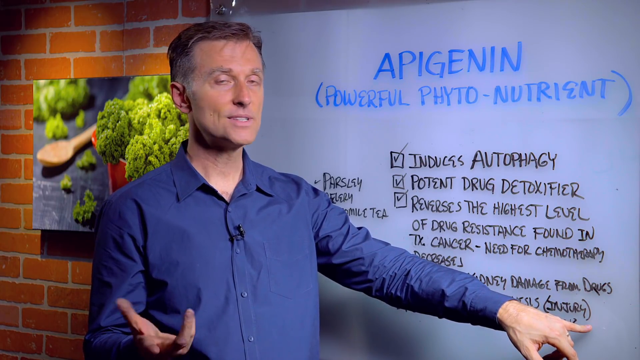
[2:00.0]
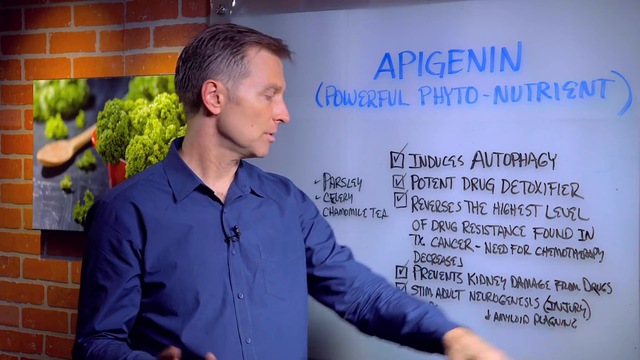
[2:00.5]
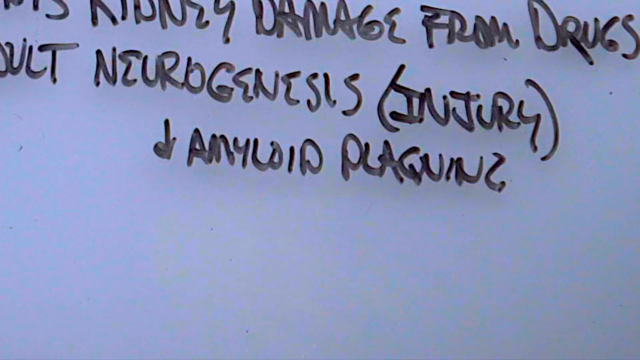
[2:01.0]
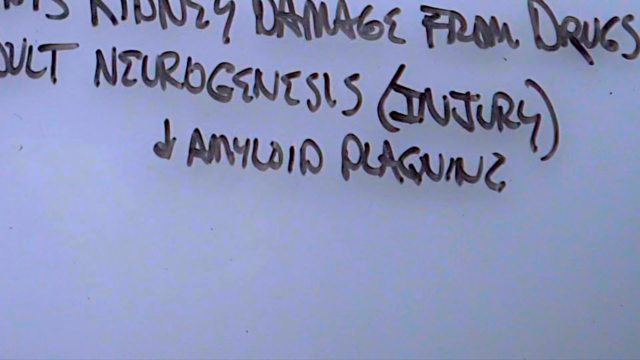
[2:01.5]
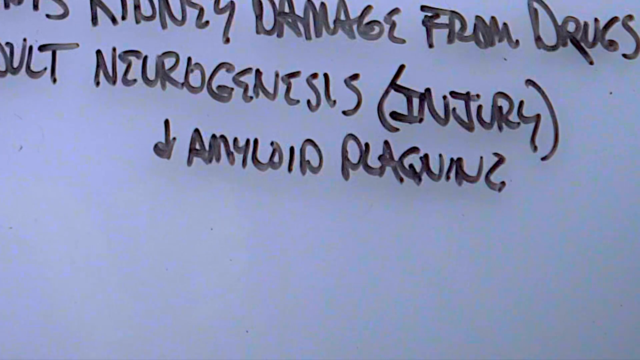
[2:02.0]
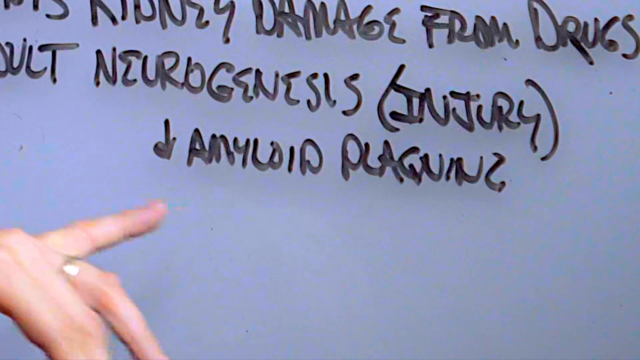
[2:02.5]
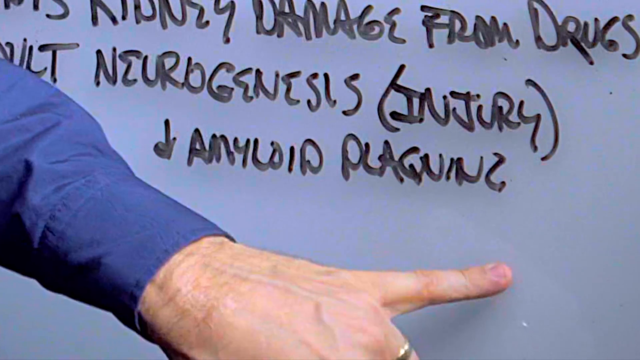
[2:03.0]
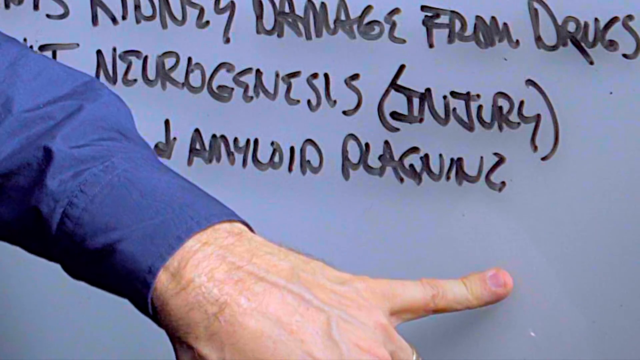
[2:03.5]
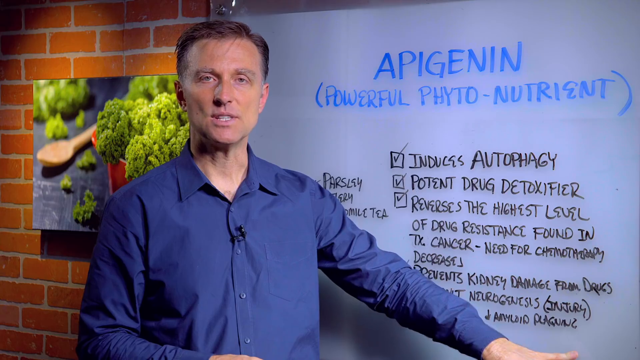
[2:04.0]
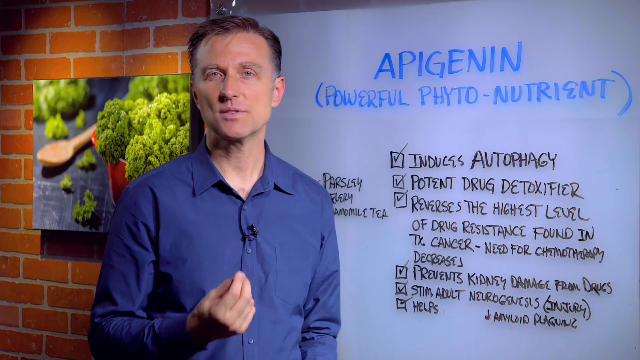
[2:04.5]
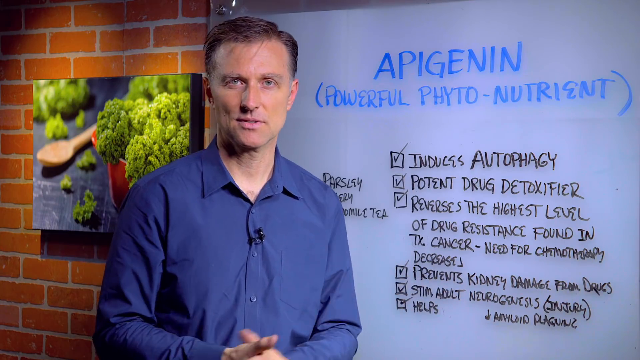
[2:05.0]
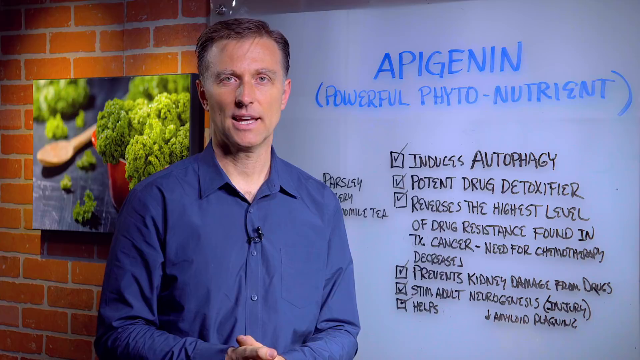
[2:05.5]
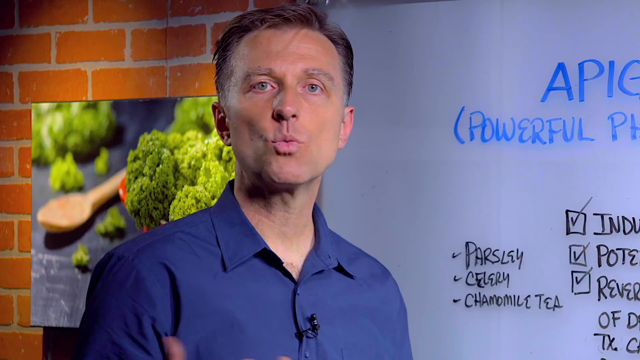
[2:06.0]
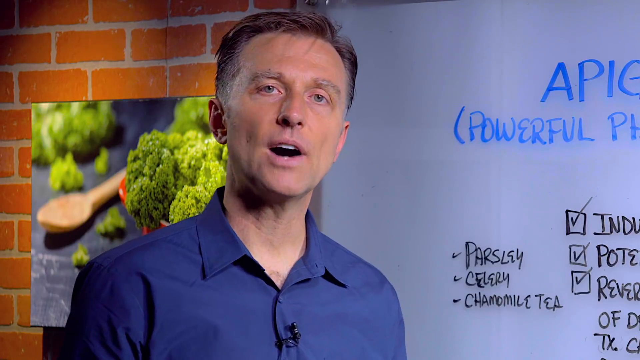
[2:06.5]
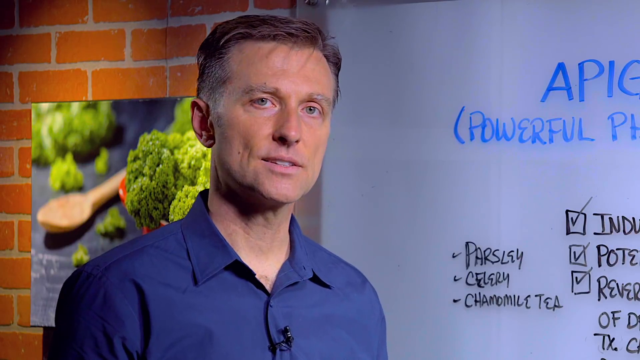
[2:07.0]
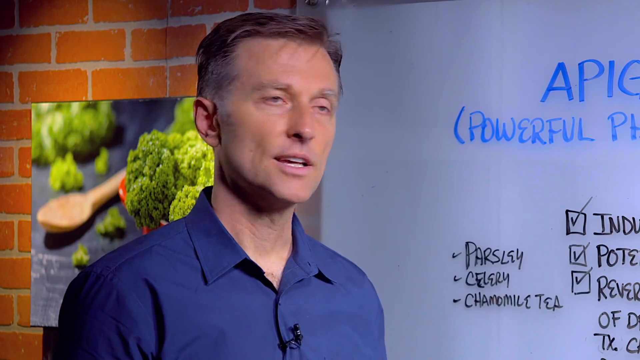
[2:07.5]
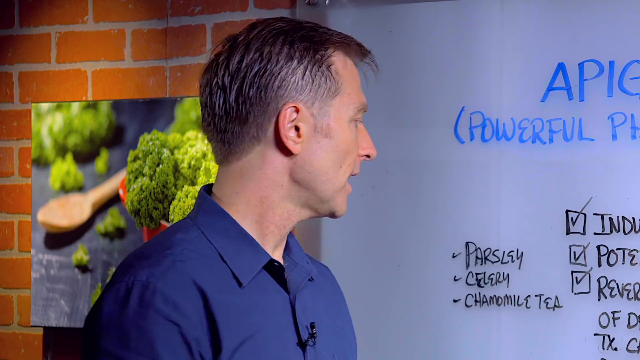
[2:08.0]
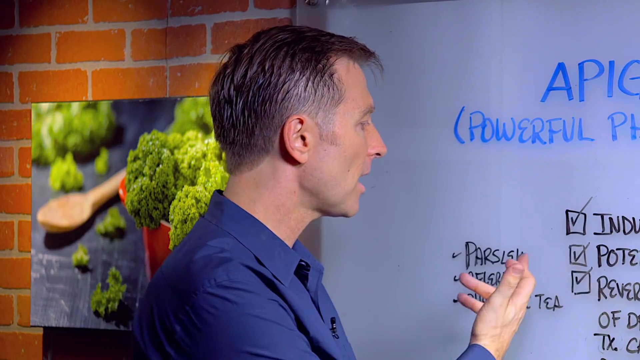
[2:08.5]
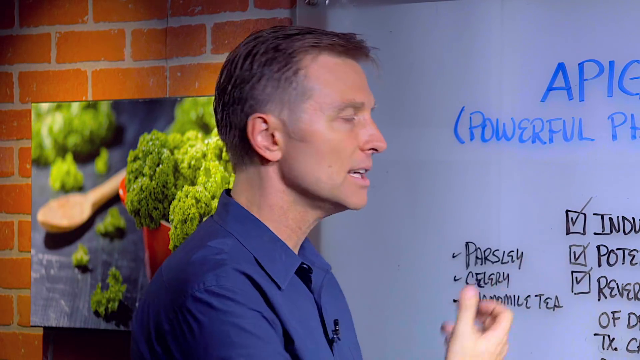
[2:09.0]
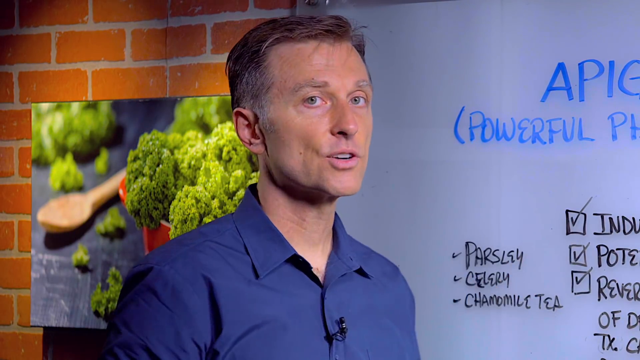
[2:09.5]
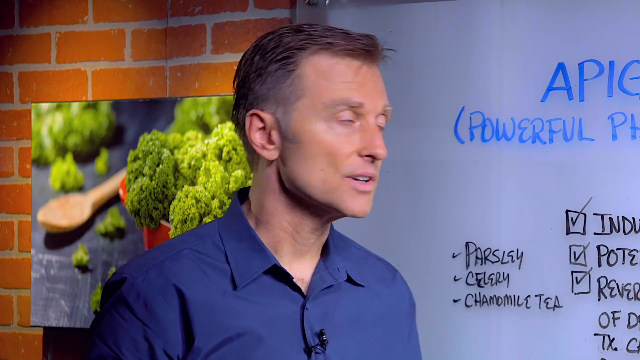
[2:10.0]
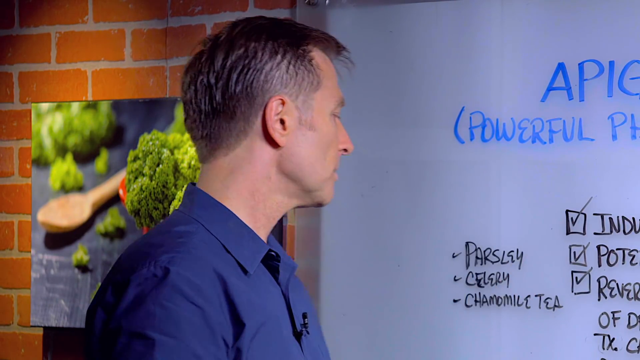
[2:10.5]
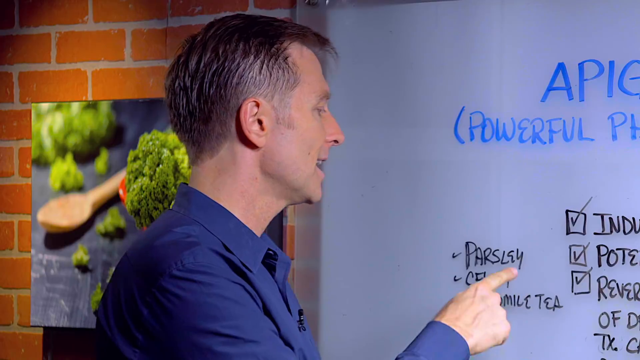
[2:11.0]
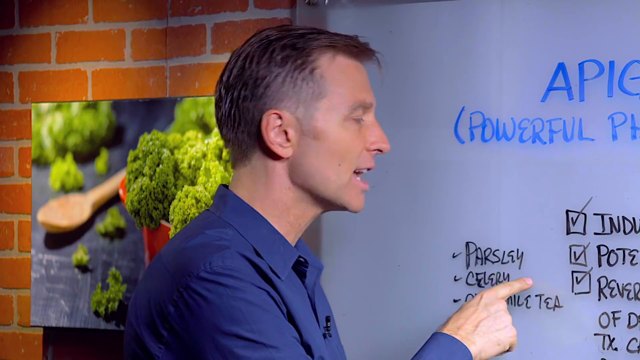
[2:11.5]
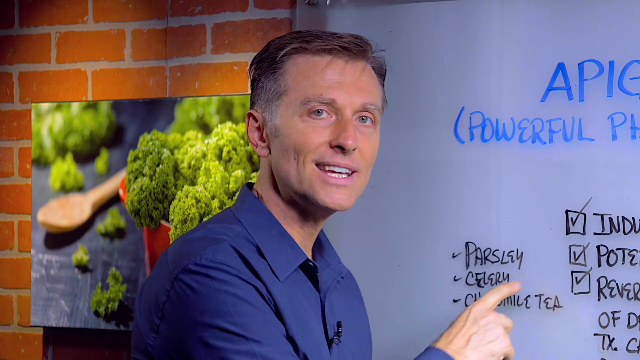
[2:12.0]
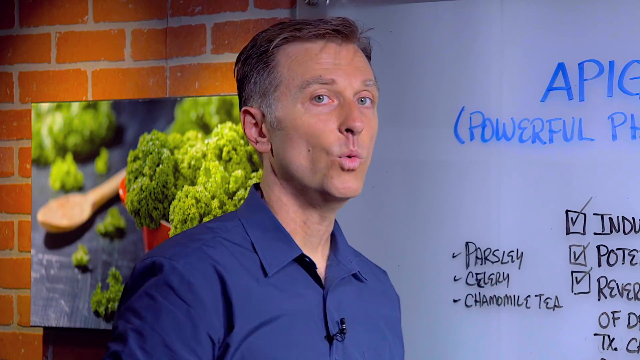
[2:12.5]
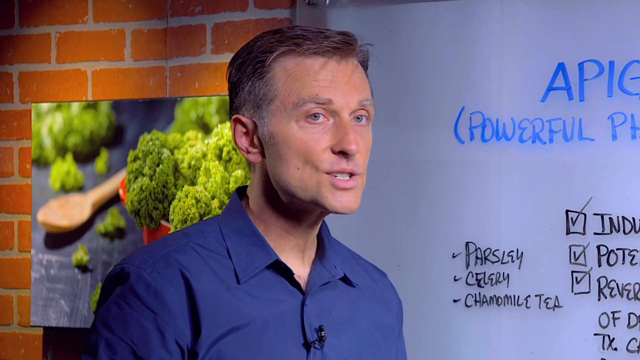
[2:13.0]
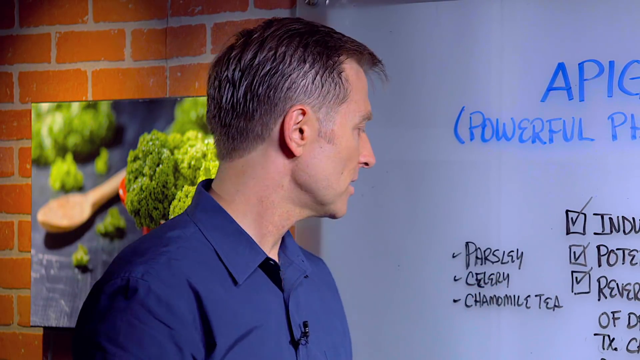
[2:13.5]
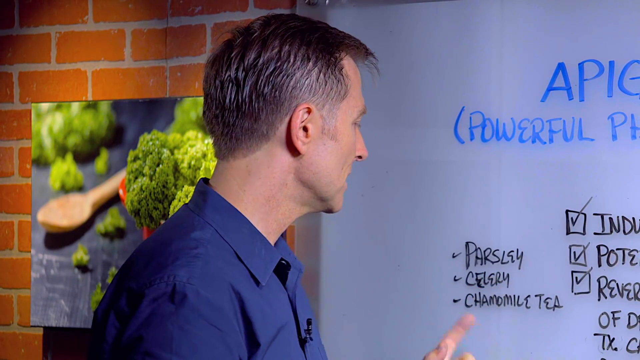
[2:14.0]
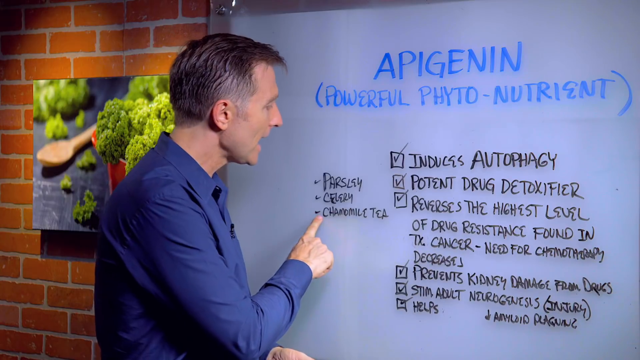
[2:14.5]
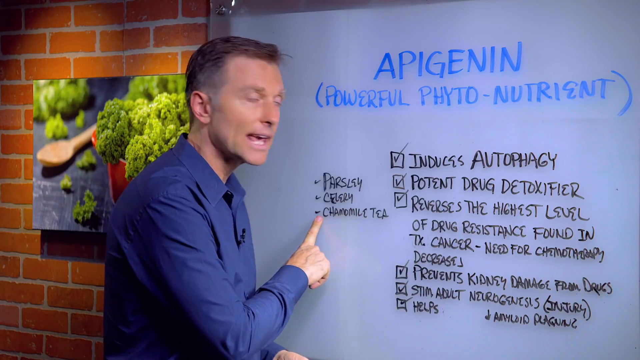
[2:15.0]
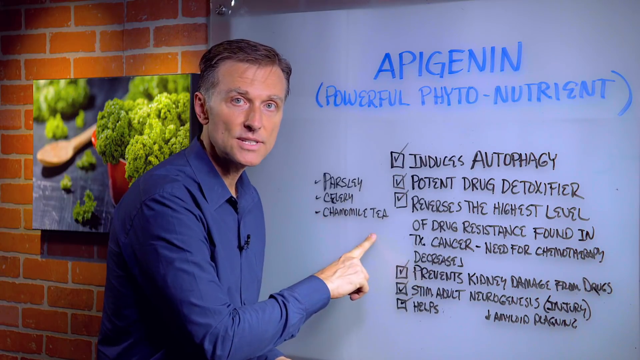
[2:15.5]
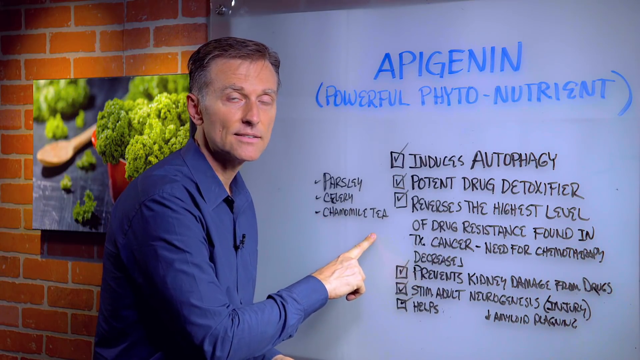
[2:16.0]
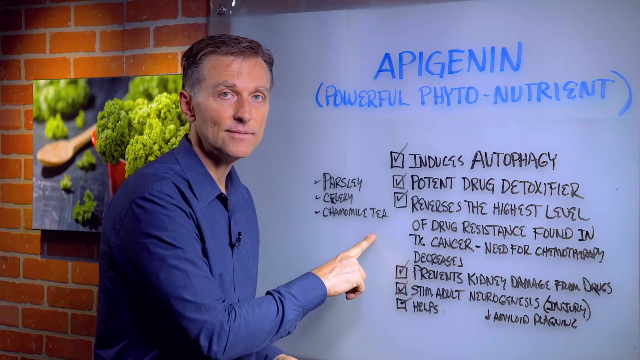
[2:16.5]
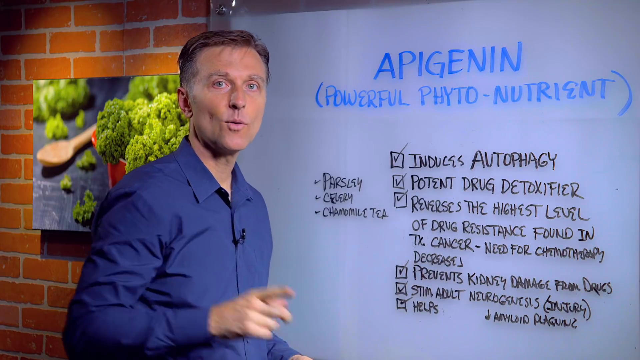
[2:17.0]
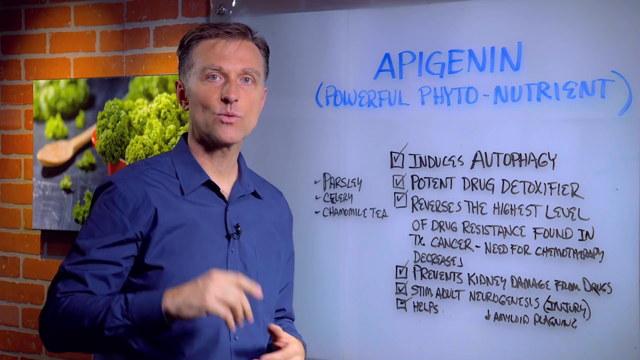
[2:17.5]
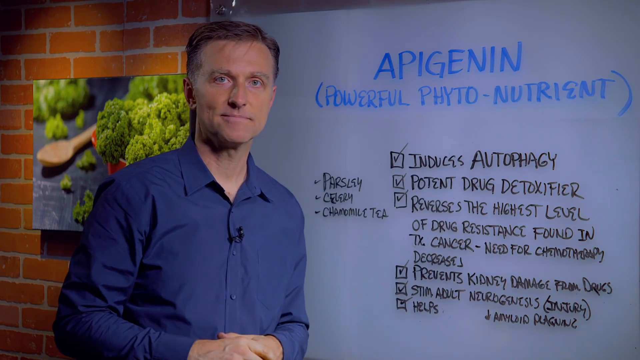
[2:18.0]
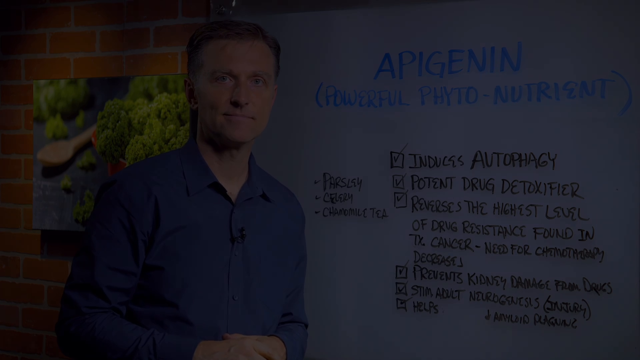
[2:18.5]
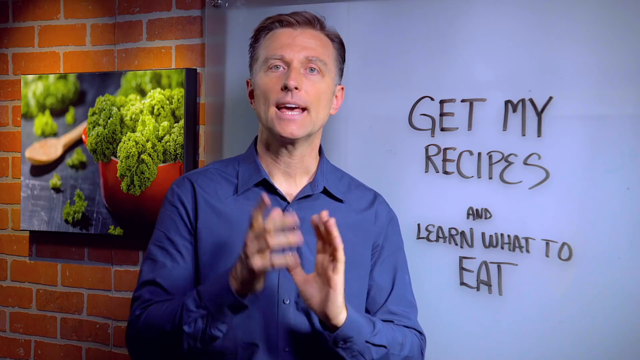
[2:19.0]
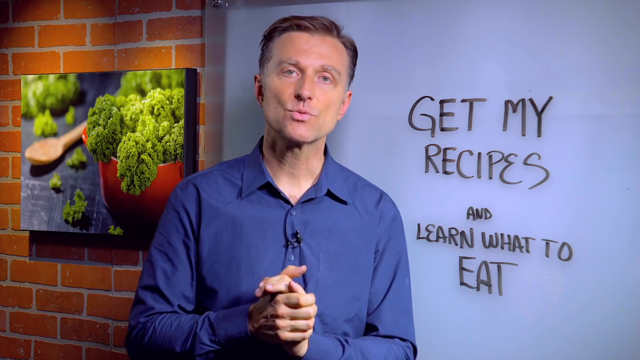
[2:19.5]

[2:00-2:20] In a more zoomed-in shot, the man uses his left hand to point to one of the very bottom points on the whiteboard. The video zooms into that point, which reads "neurogenesis, injury, amyloid, plaque"; the last word is very hard to read because its letters run into one another. The video zooms back out, then zooms in on him a little closer to the board, and he points to the foods listed: parsley, celery and chamomile tea. At the very end, new words appear for only a second: everything else on the whiteboard has been erased and it says "get my recipes and learn what to eat".